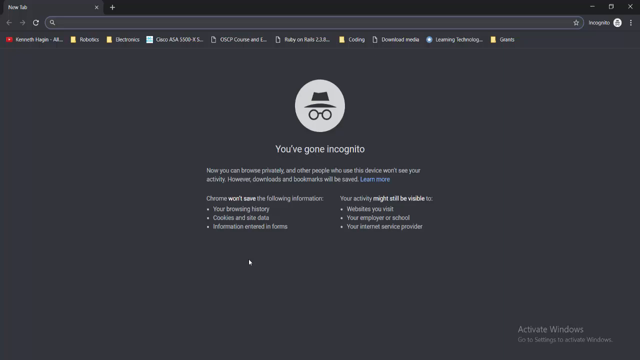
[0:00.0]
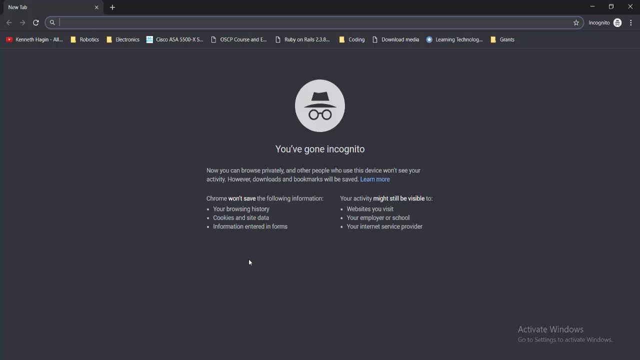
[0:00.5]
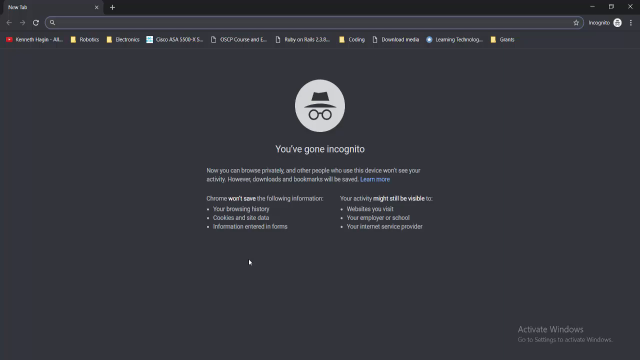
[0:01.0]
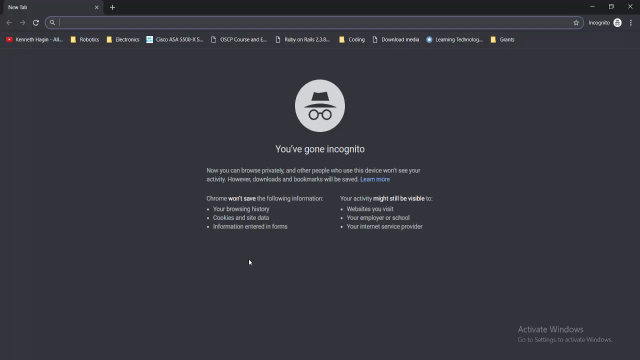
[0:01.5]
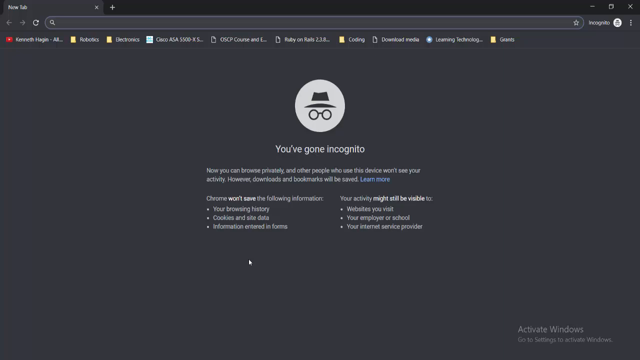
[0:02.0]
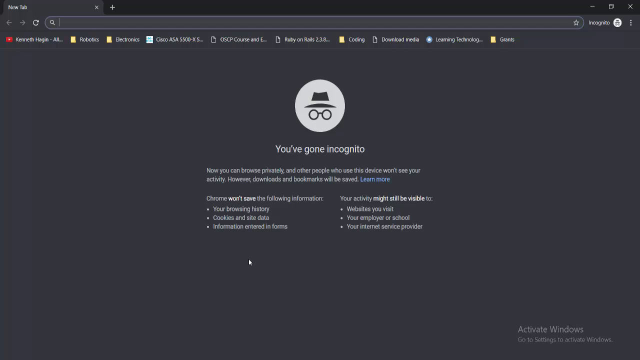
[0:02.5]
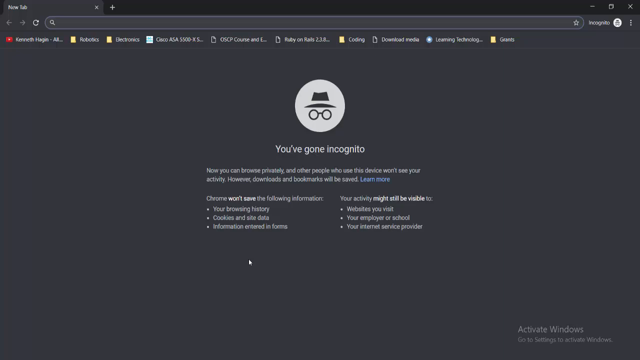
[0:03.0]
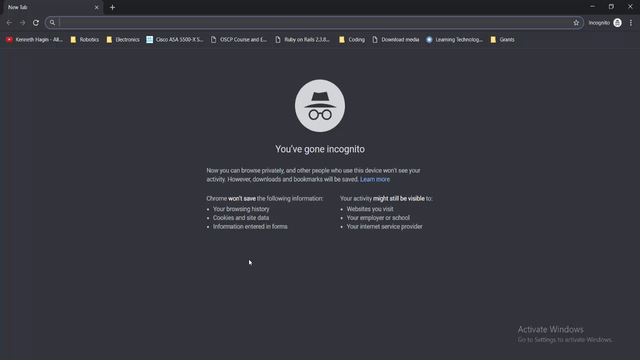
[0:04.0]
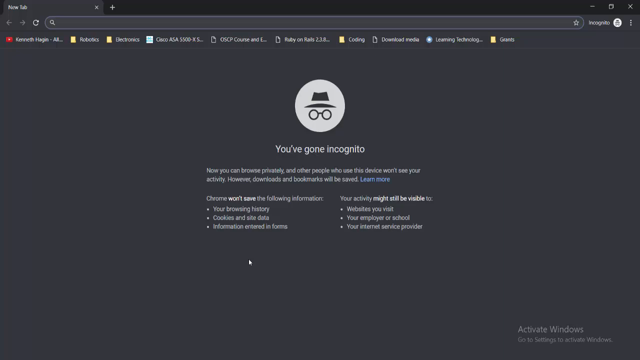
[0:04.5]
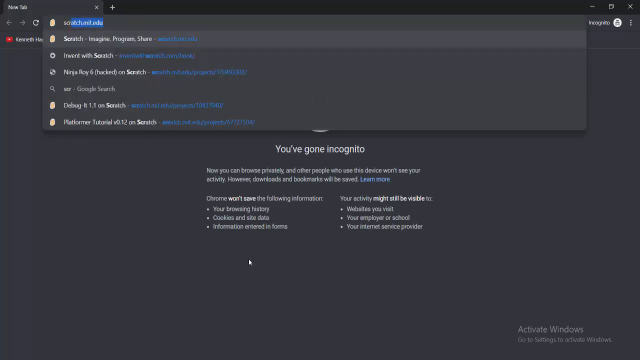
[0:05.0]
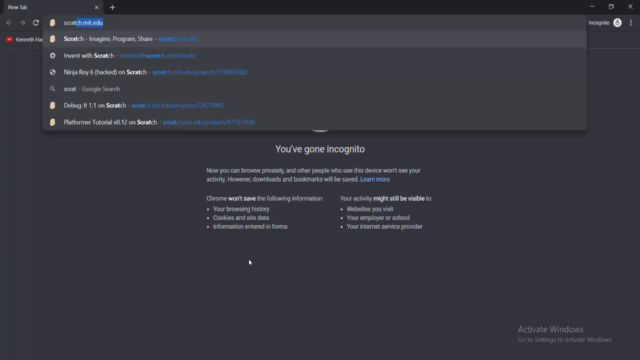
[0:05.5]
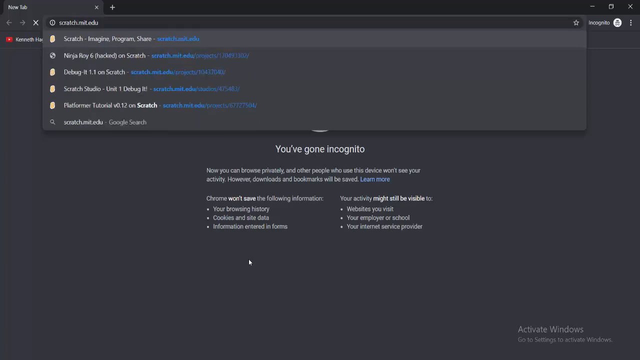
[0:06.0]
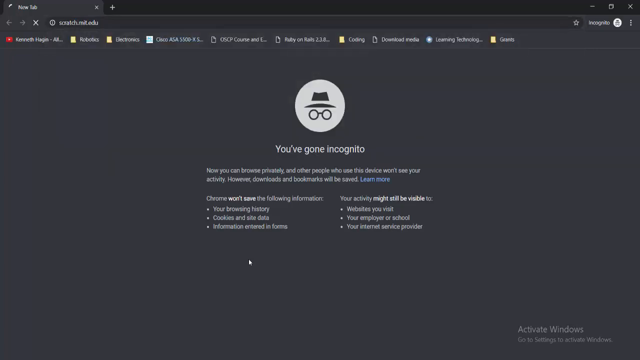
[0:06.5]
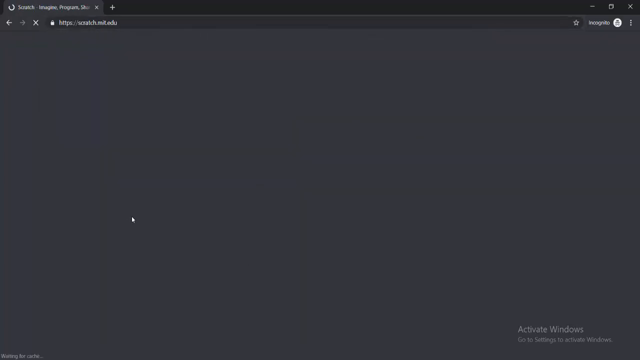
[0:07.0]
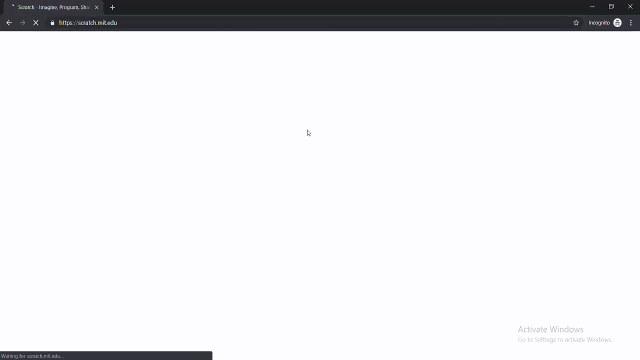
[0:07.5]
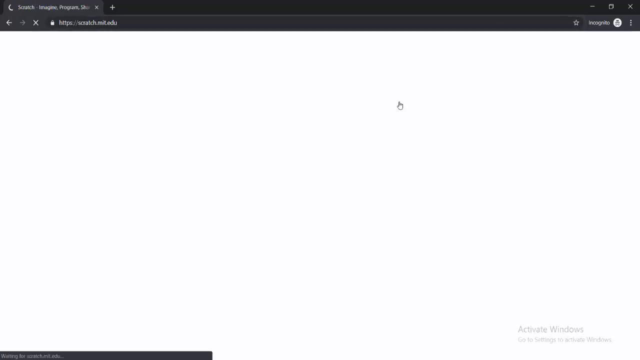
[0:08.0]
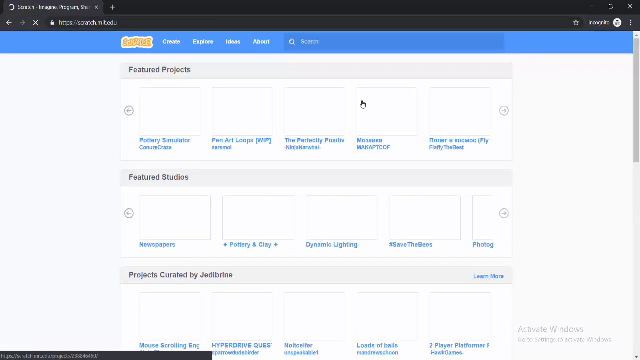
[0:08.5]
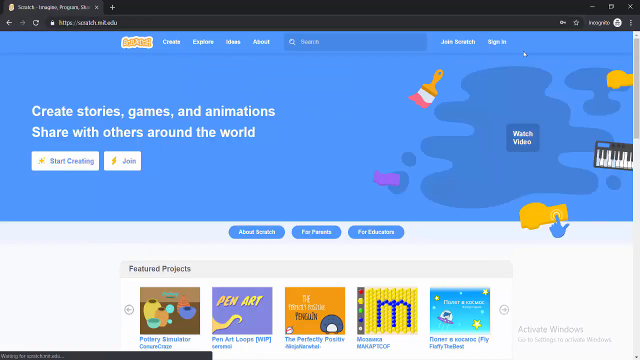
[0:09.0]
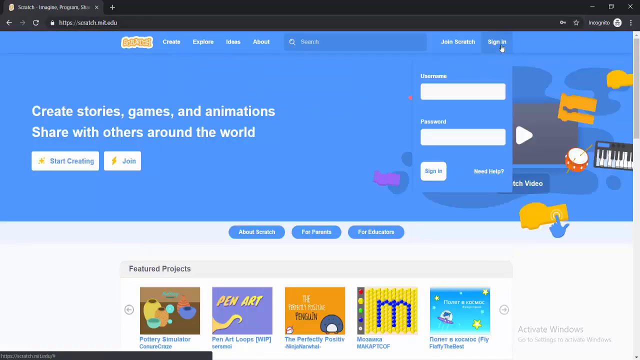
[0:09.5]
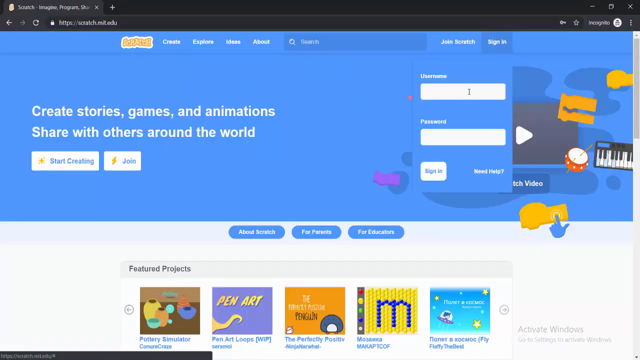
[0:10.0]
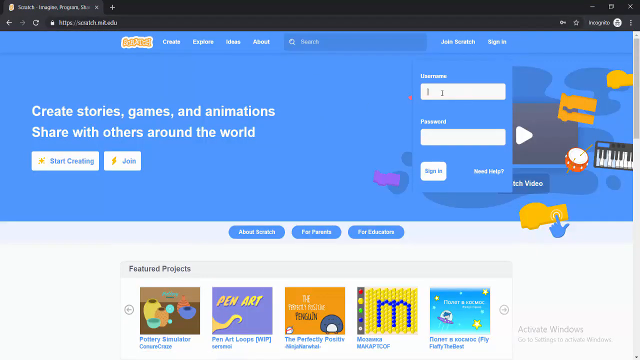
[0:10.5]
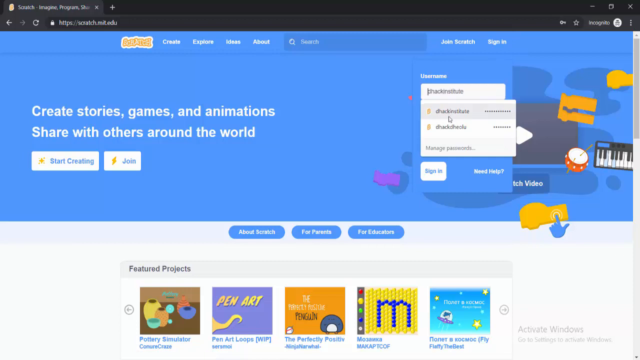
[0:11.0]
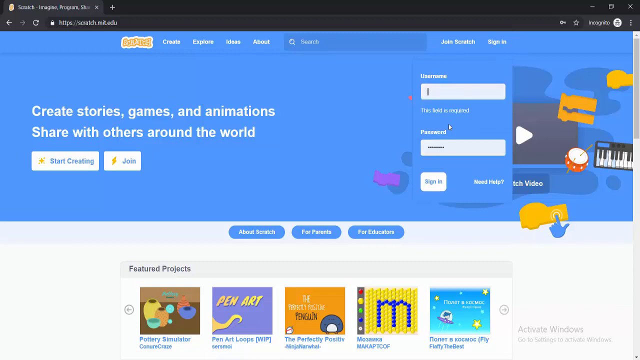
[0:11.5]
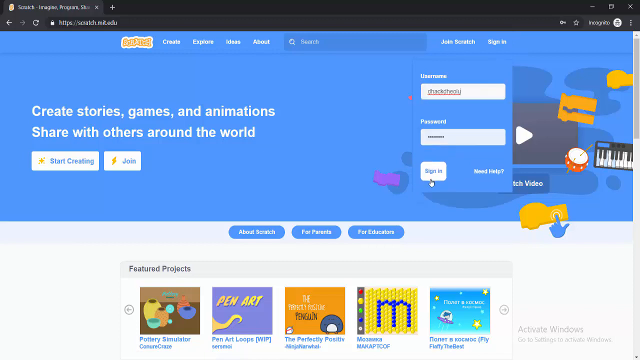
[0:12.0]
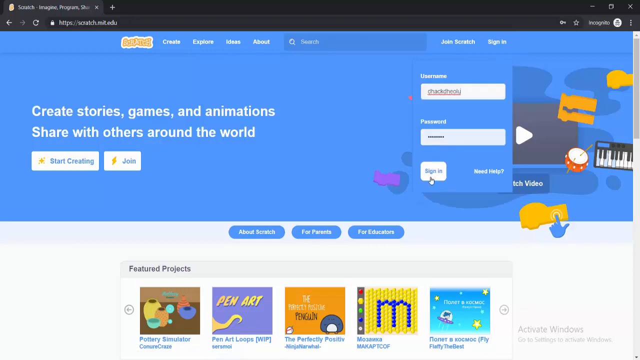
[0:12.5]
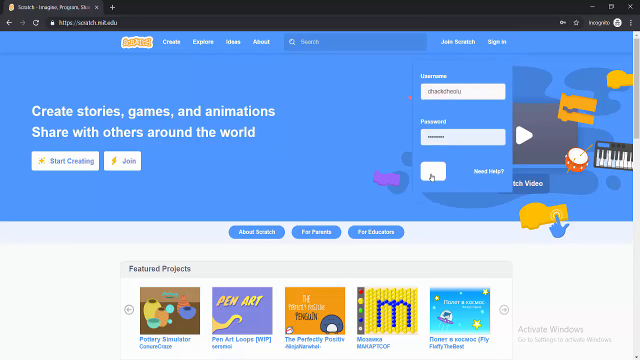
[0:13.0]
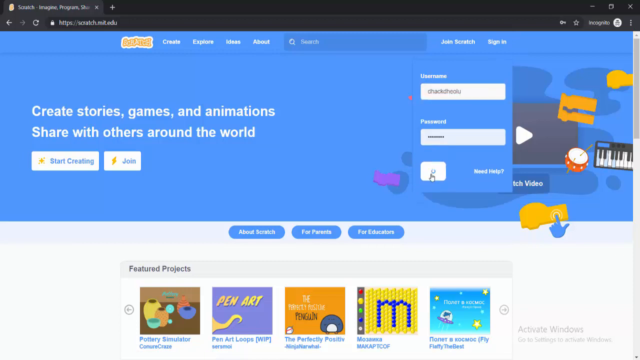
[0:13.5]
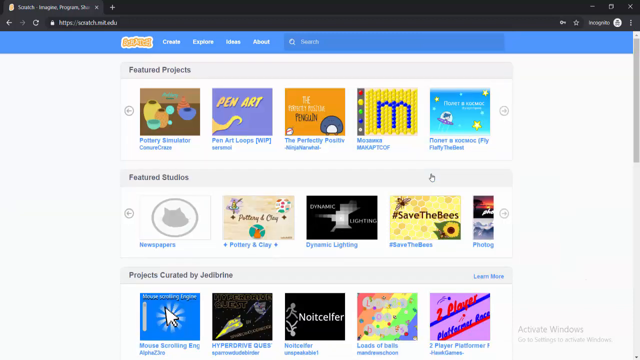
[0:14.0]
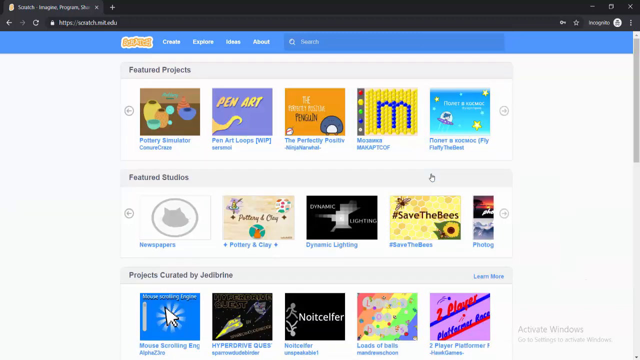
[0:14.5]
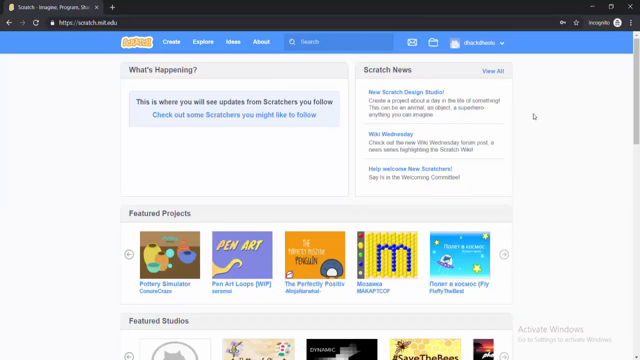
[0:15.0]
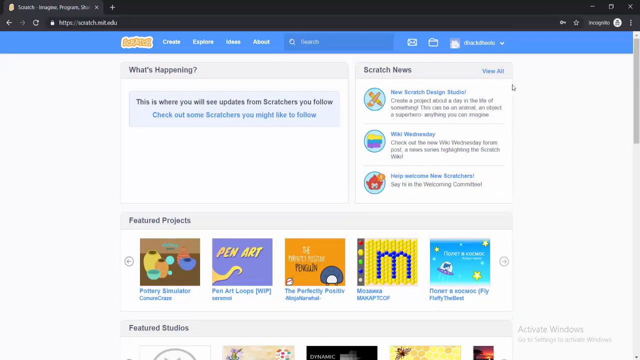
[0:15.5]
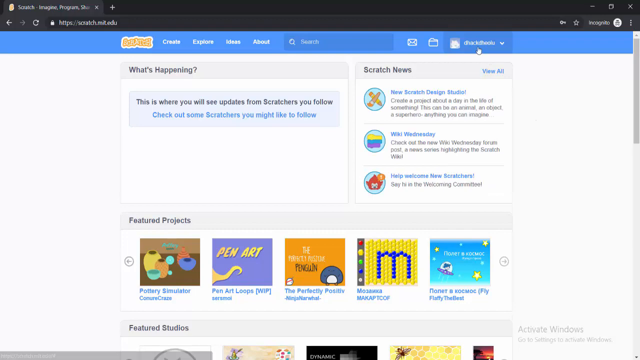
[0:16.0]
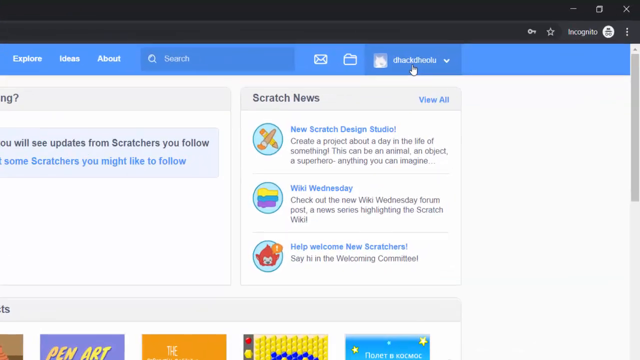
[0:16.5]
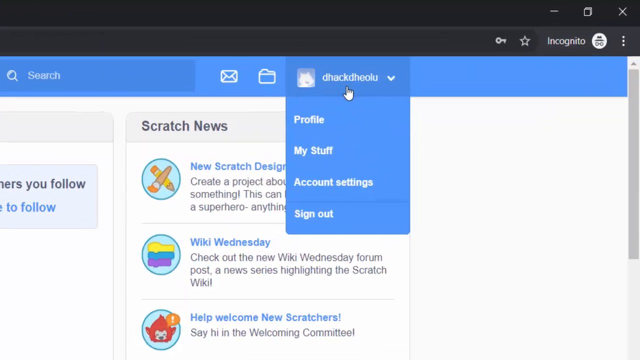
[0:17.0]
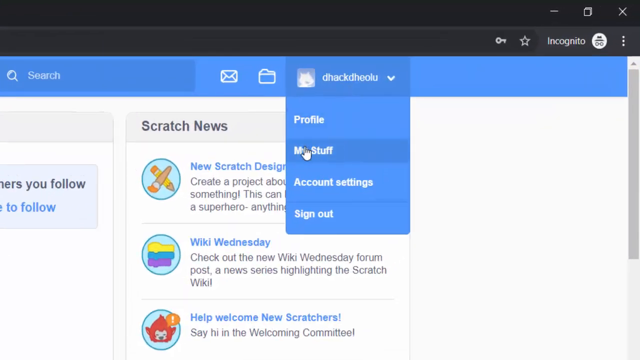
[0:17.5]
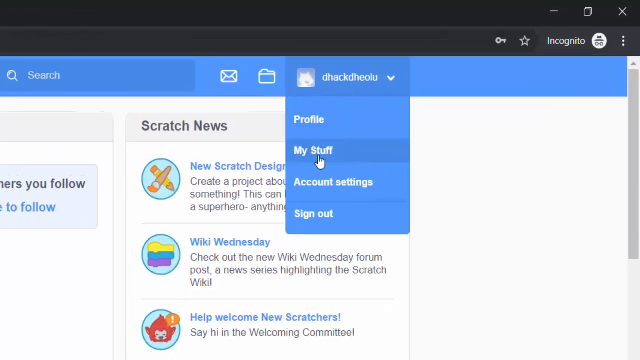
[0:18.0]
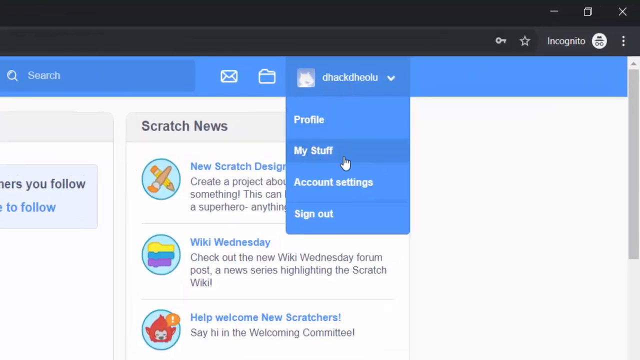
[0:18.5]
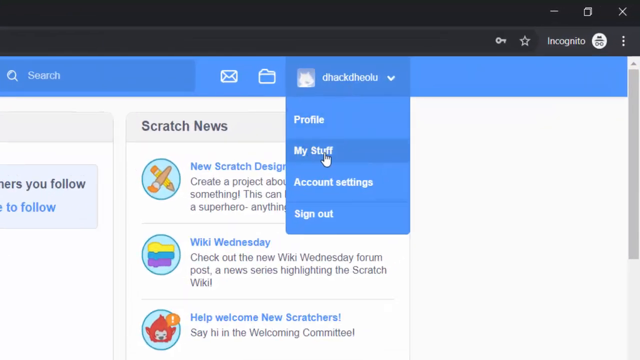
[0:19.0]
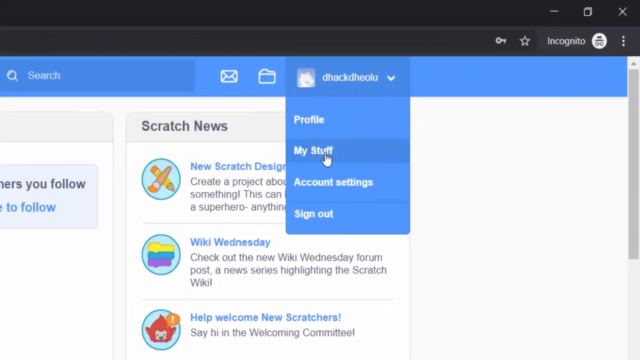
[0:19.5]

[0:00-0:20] An incognito-mode Chrome tab is shown: the standard incognito window with a black, dark-themed background. It has some bookmarks for YouTube and different folders and courses. The background is the default incognito tab, which says "you've gone incognito mode" with an incognito icon above it, along with some informational description. The mouse hovers around the middle of the screen. The person clicks into the search bar, which displays search history and autofill, and goes to the website scratch.mit.edu. The website loads for a moment and then shows the homepage of the Scratch website for MIT. He clicks the sign-in button at the top right of the screen, and a drop-down menu appears for him to log in with his username and password. He fills these in with his browser's password and login autofill, clicks log in, and is now logged in on the Scratch homepage. He scrolls down a little. The screen then shows a panel that says "what's happening" on the left, "Scratch News" on the right, and "Featured Products". He clicks on his profile at the top right of the screen, the video zooms in on it, and a drop-down menu appears with the words "Profile", "My Stuff", "Account Settings" and "Sign Out". He hovers his mouse over the My Stuff button of the drop-down.